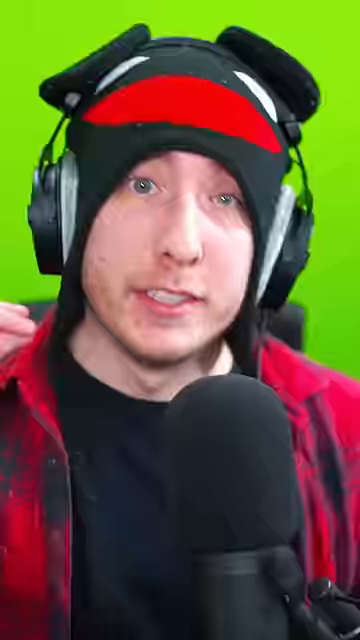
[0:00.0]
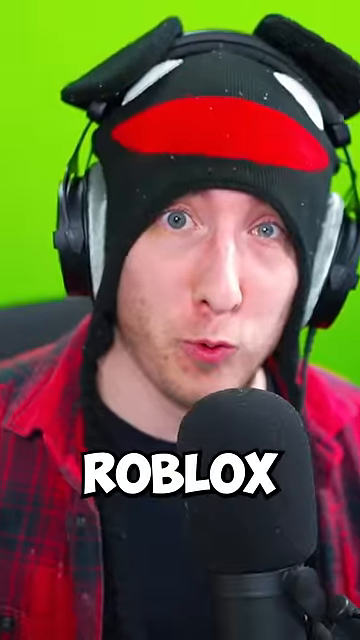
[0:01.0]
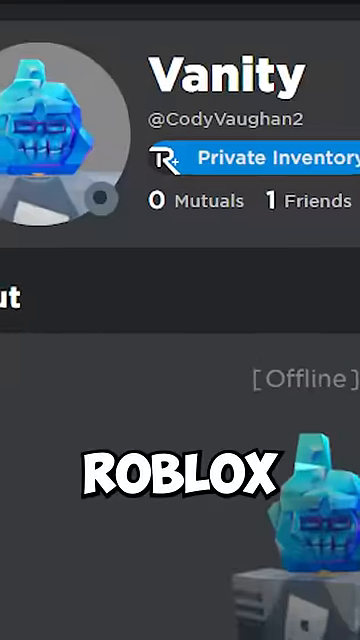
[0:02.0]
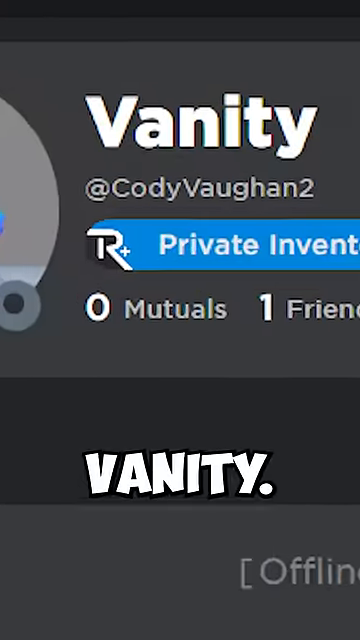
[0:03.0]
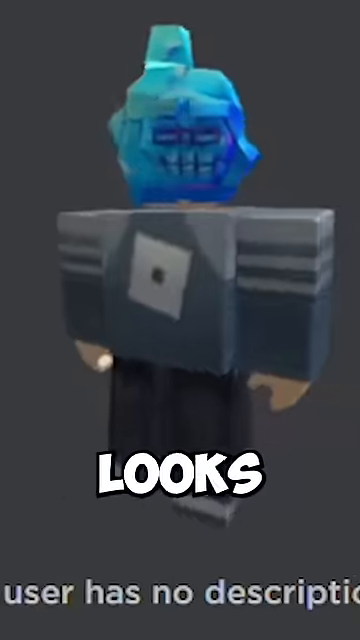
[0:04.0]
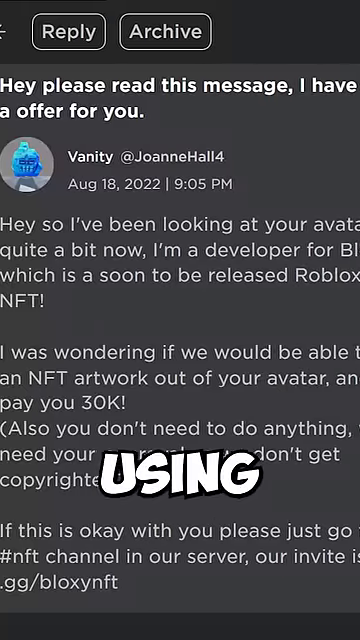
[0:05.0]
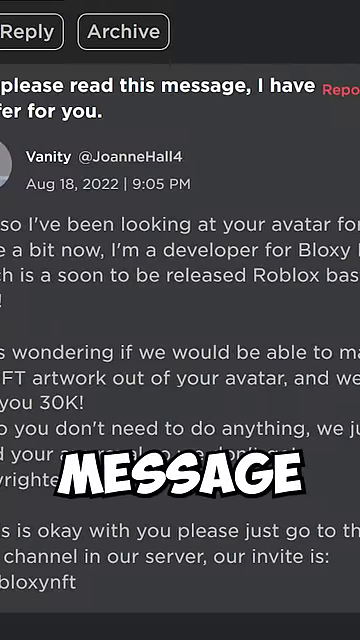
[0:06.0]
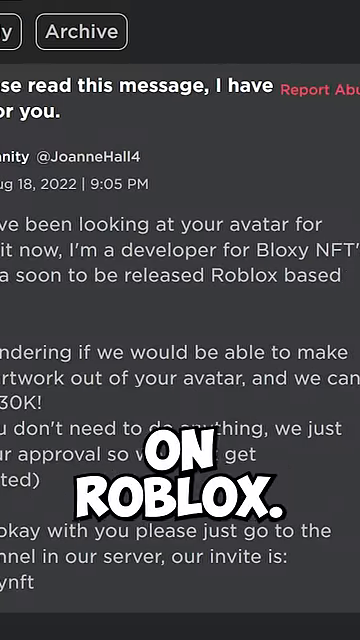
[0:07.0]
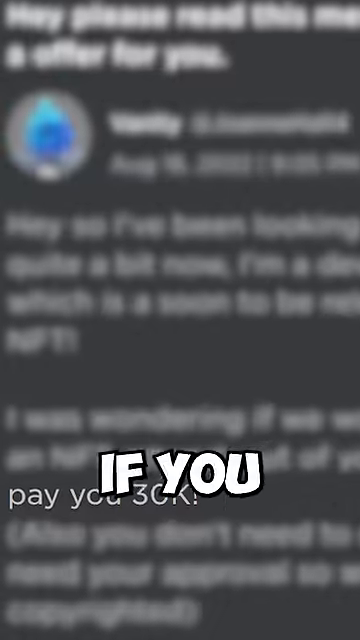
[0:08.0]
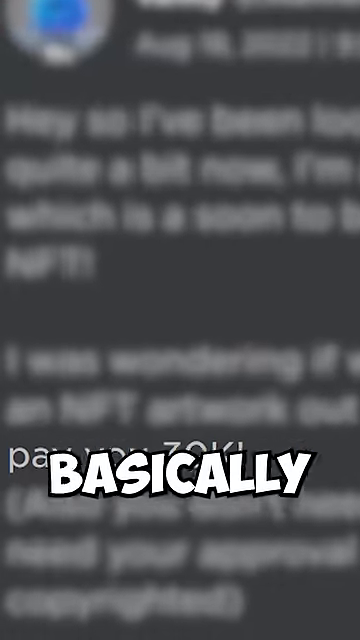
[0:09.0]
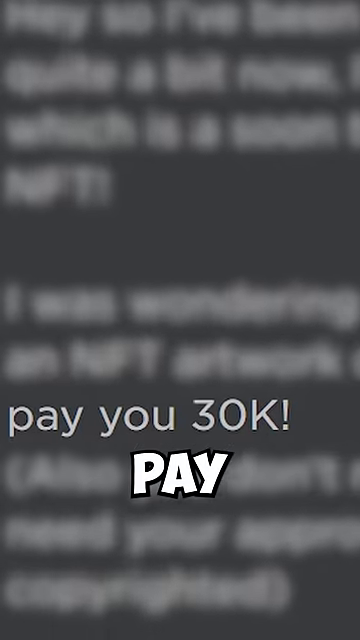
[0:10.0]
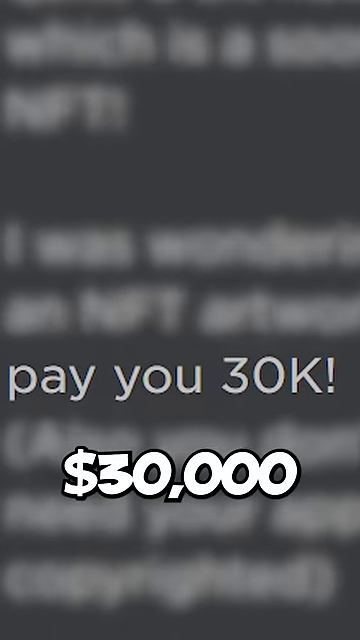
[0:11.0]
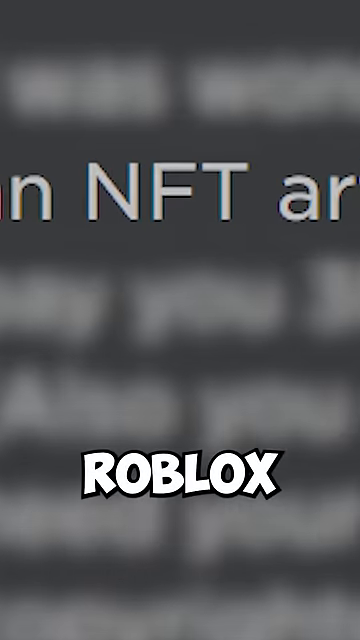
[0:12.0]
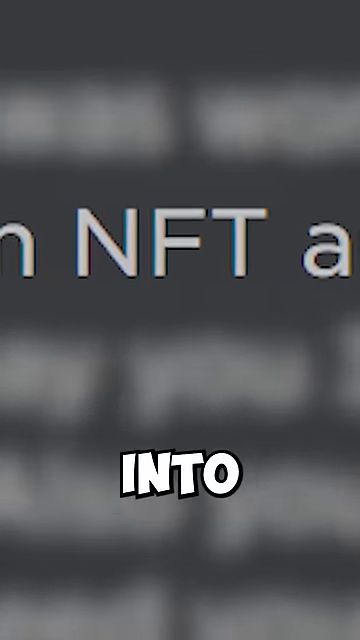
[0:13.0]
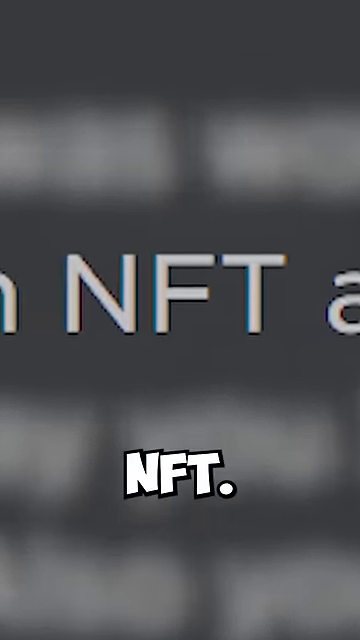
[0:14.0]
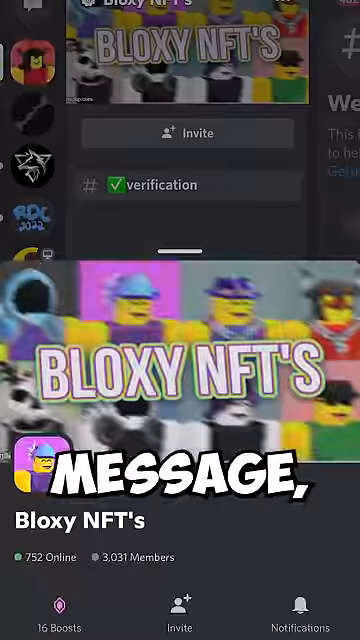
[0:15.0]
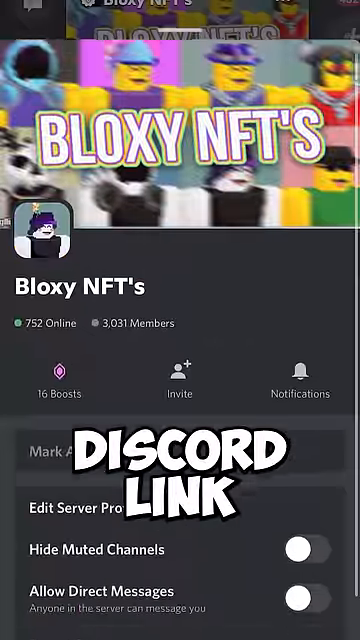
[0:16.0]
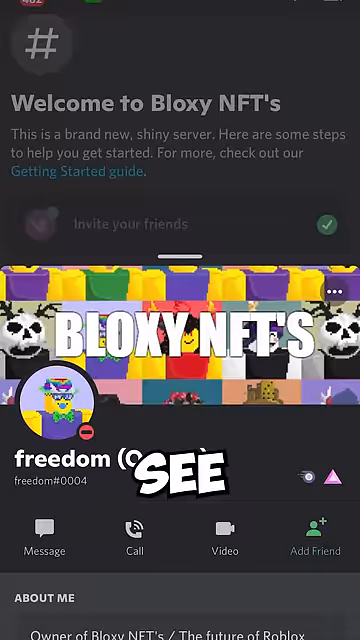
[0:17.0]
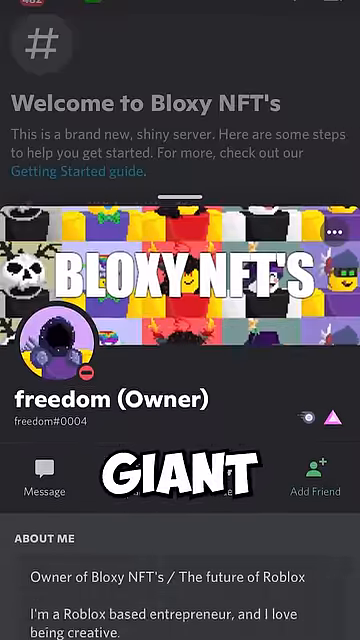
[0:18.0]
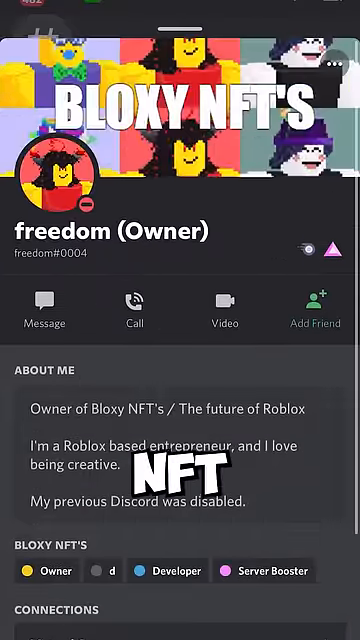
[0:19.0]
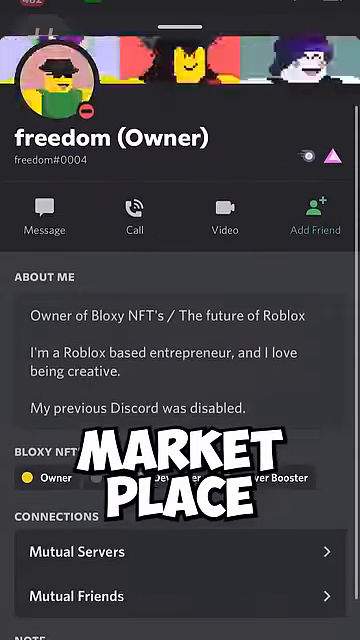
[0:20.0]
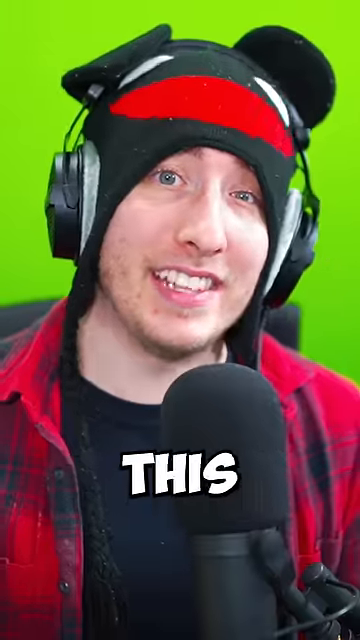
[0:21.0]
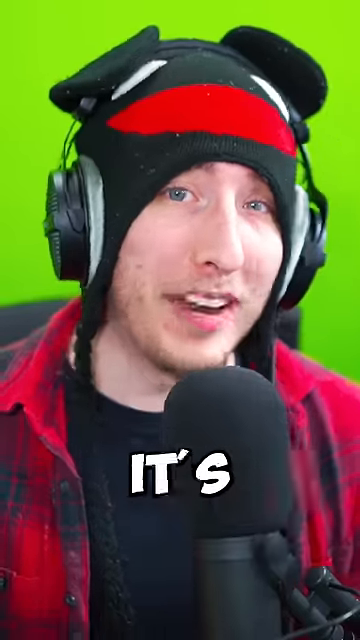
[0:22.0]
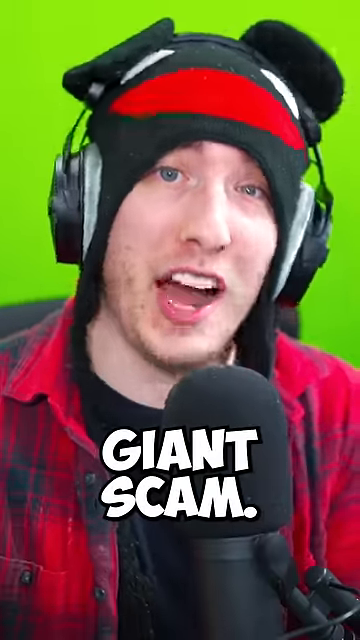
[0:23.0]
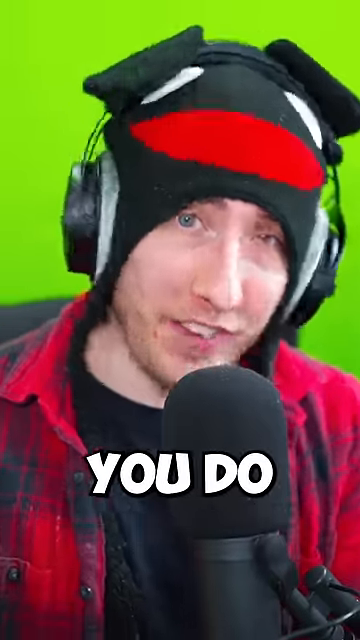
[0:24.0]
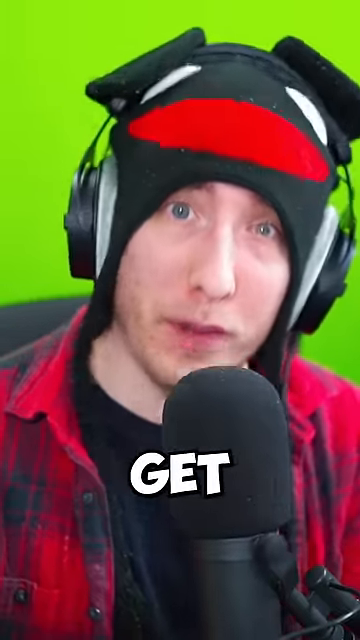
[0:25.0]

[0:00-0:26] The video is about a Roblox scam involving a Discord link. A man talks about someone named Vanity who apparently has been using bots to mass message people on Roblox. A message is shown offering $30,000 to turn a Roblox avatar into an NFT, with a Discord link at the bottom of the message. Later the text "Joanne Hall" appears on screen.